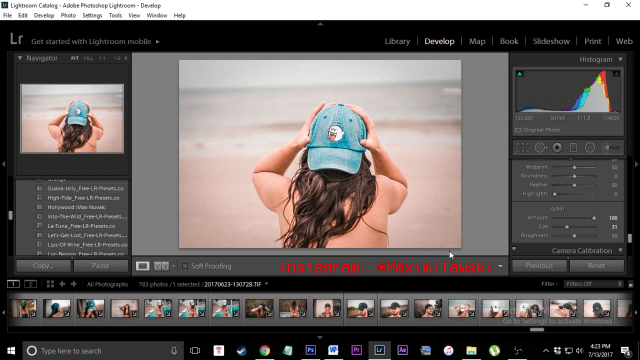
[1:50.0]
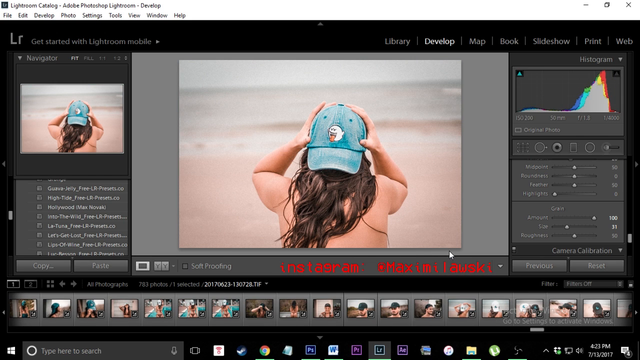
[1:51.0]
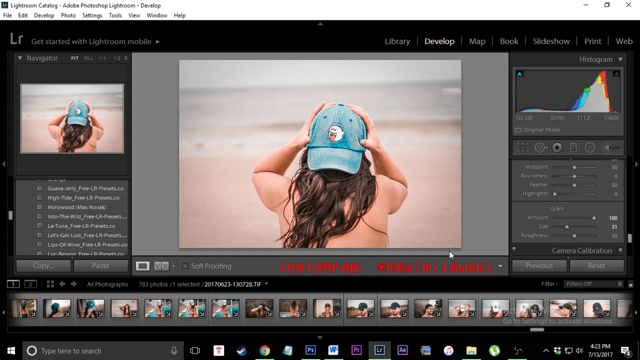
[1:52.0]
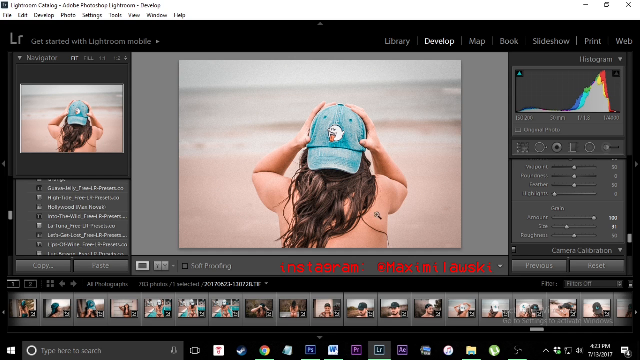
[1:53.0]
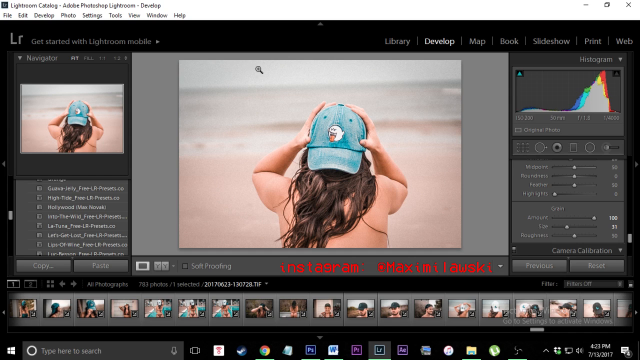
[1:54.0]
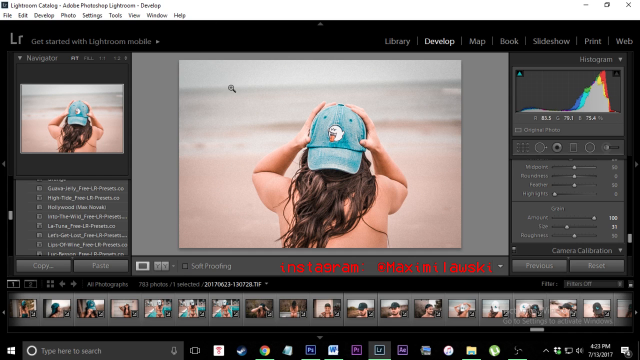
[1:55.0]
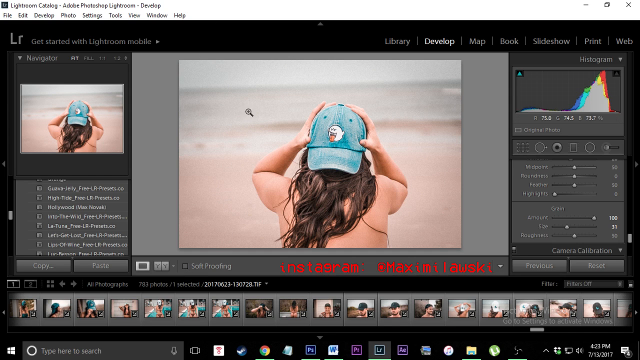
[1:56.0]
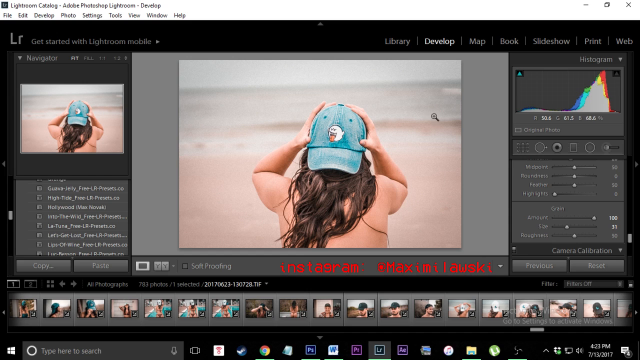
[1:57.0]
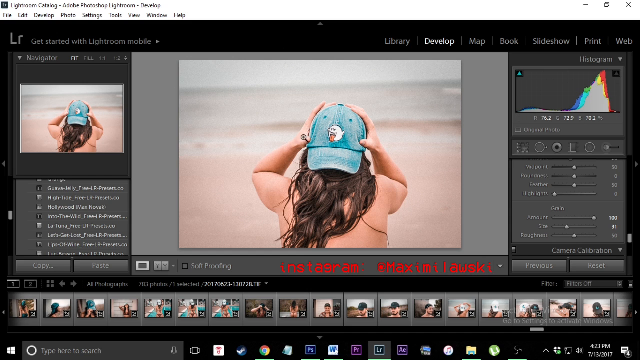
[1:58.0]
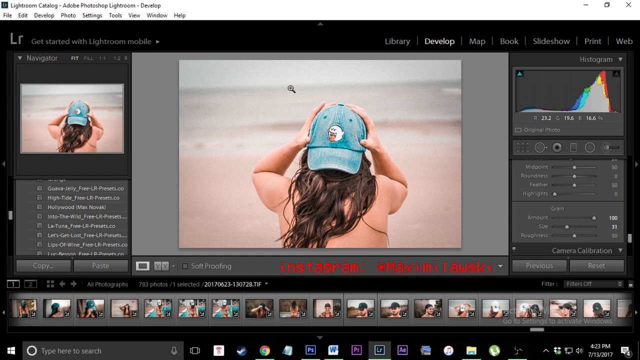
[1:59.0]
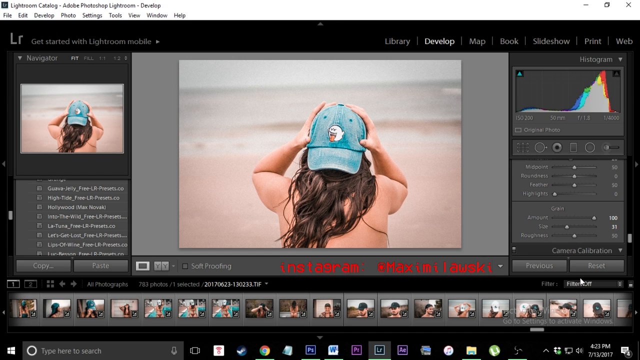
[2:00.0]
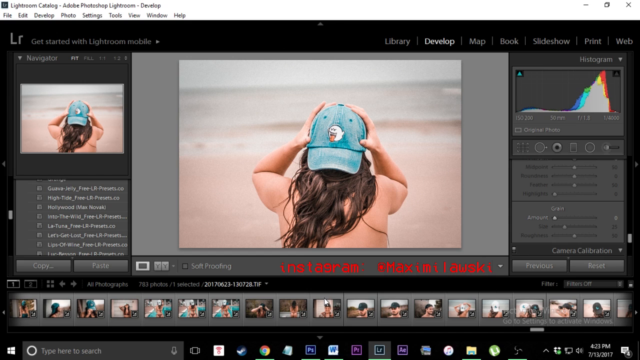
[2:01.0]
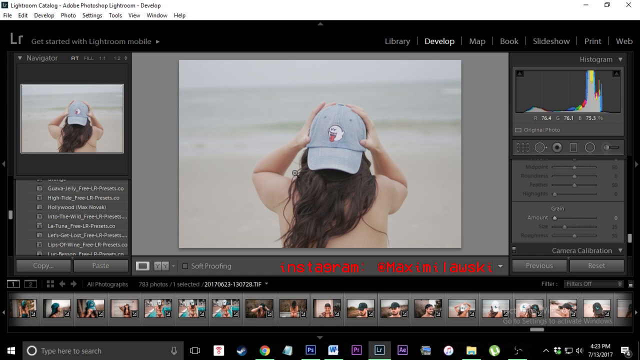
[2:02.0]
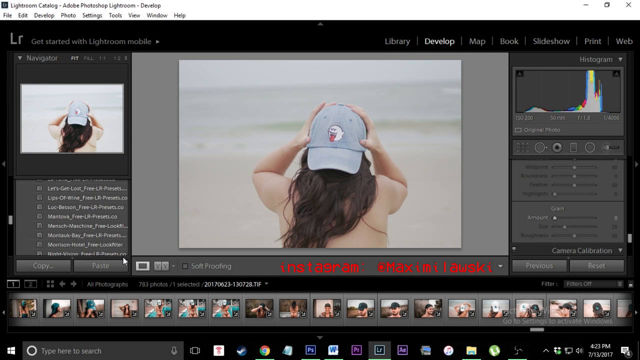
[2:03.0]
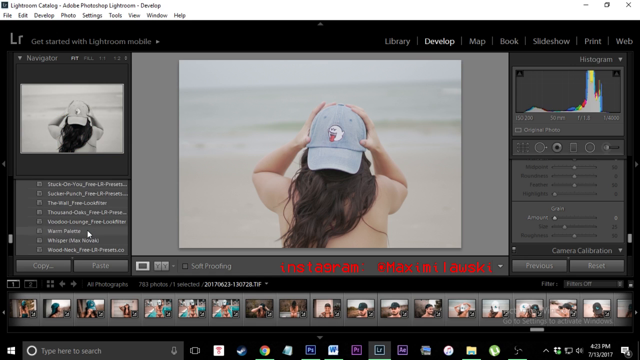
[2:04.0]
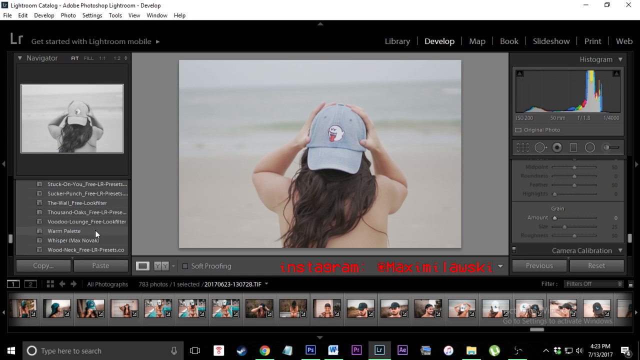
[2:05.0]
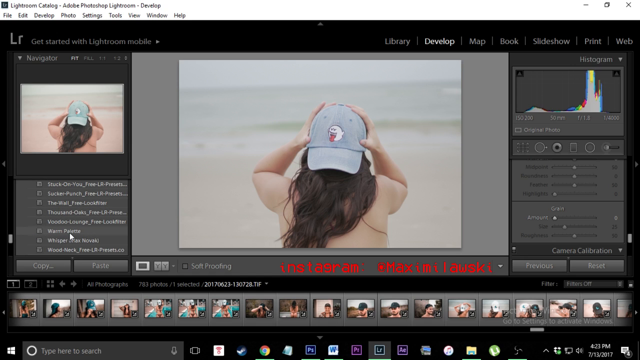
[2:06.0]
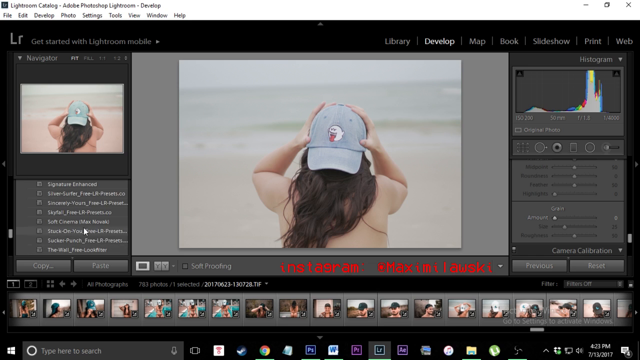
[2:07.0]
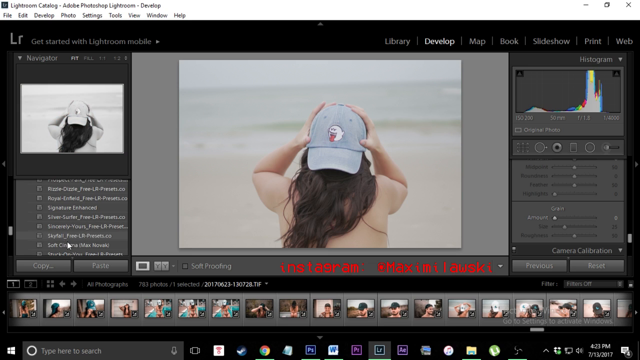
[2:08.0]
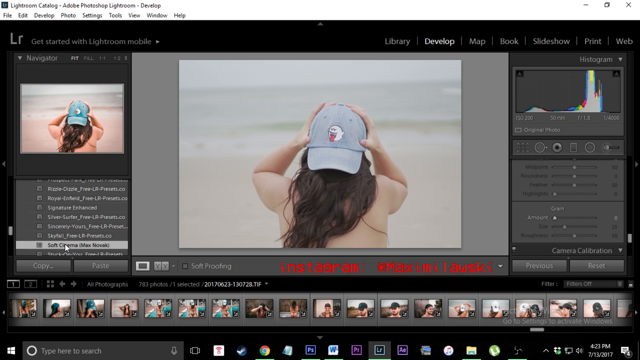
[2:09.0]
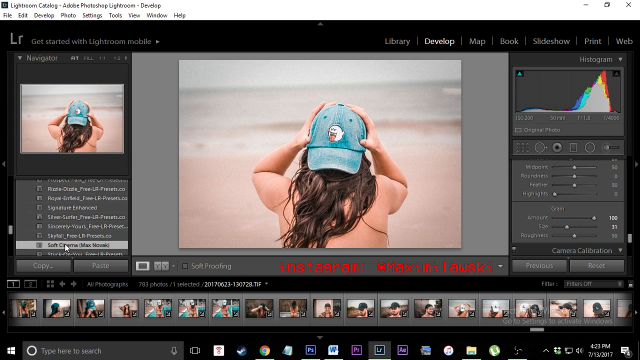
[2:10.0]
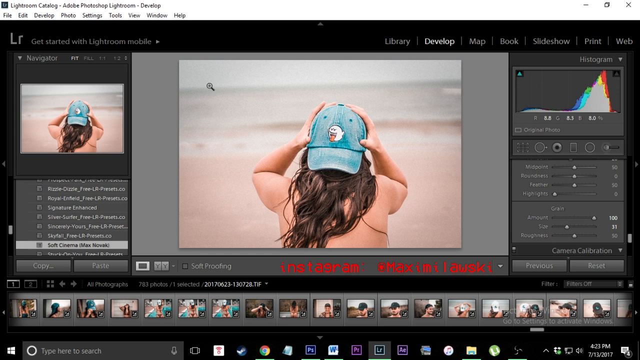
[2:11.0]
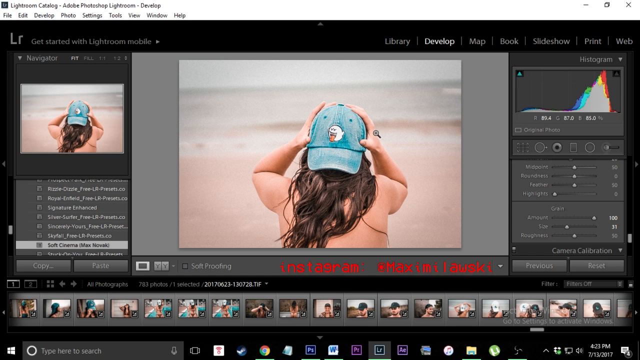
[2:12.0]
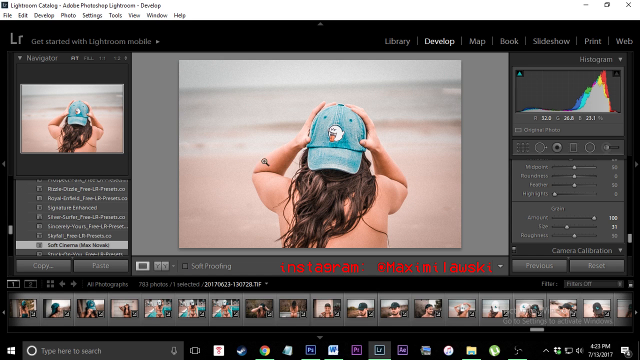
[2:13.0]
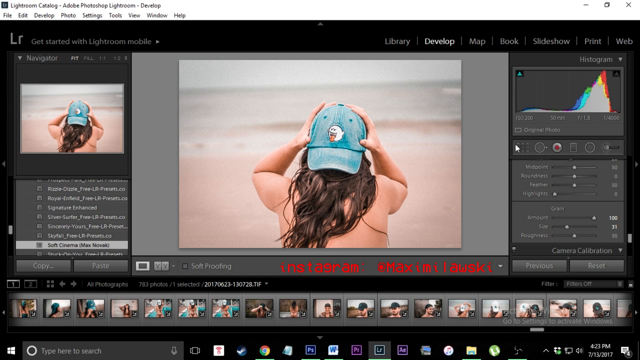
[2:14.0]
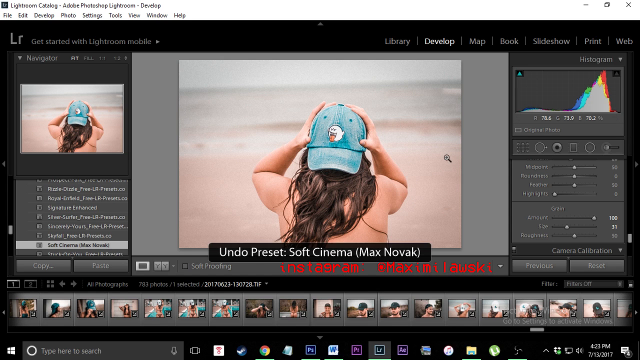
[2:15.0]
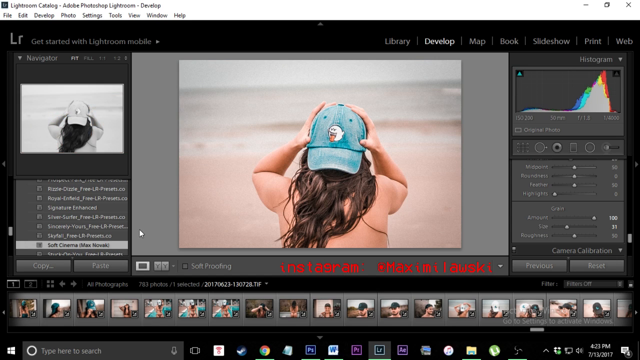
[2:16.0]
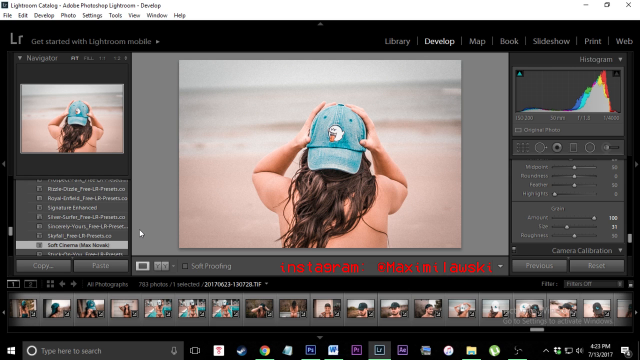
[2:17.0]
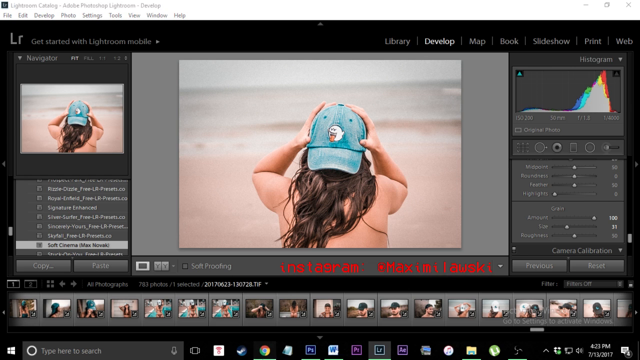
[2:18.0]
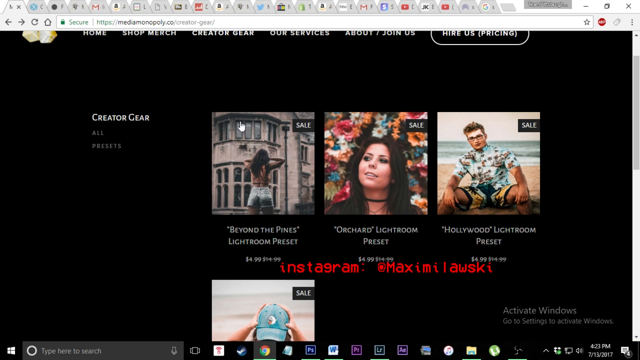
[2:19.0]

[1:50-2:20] A photo shows a woman holding her head, with a naked body. Effects are on the left side, and each time one is clicked, the photo changes, becoming darker, duller, or brighter, altering its original appearance. Afterward, all the edited photos appear on the screen, and the edited images also appear on another screen.